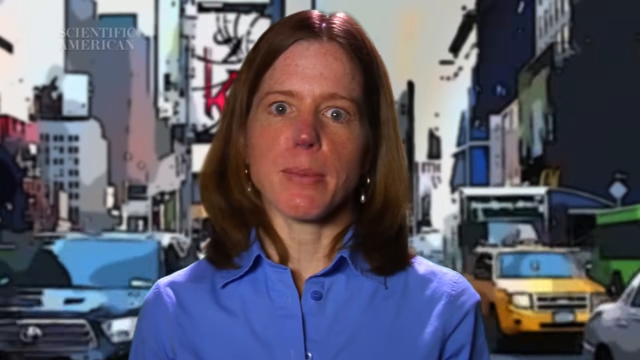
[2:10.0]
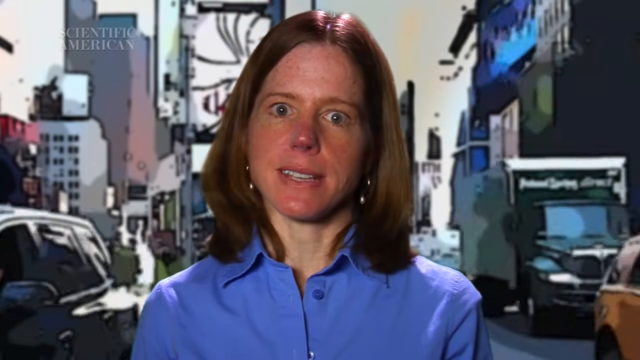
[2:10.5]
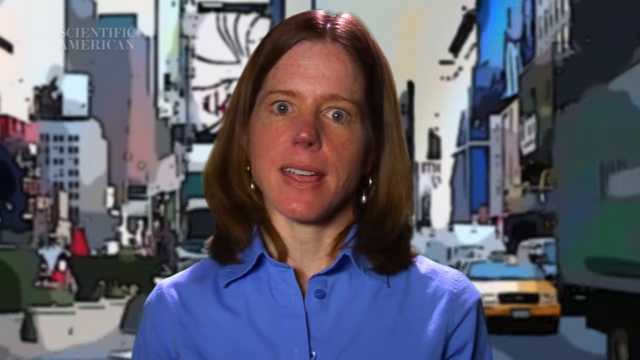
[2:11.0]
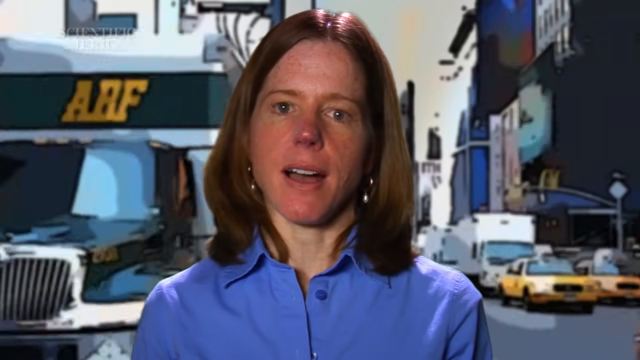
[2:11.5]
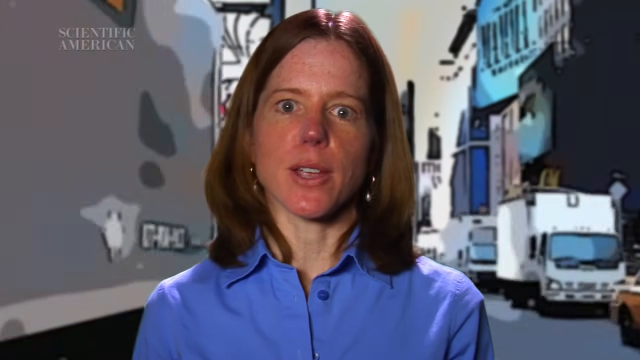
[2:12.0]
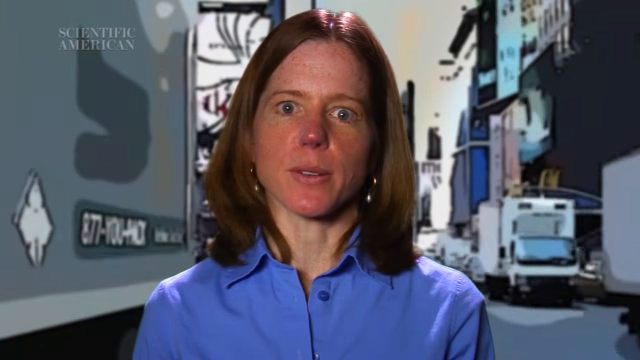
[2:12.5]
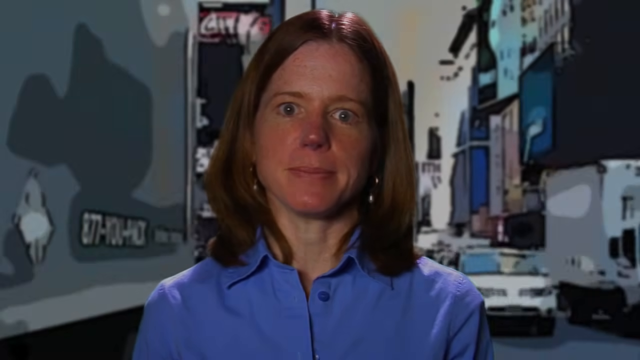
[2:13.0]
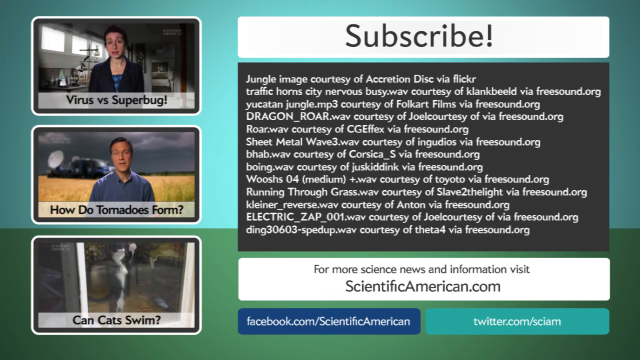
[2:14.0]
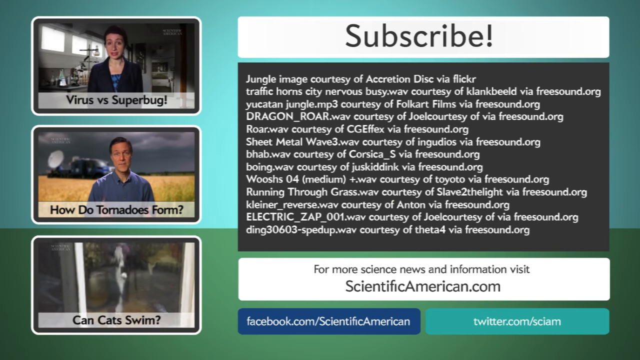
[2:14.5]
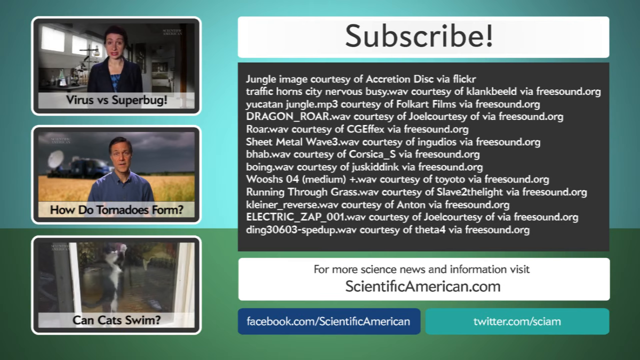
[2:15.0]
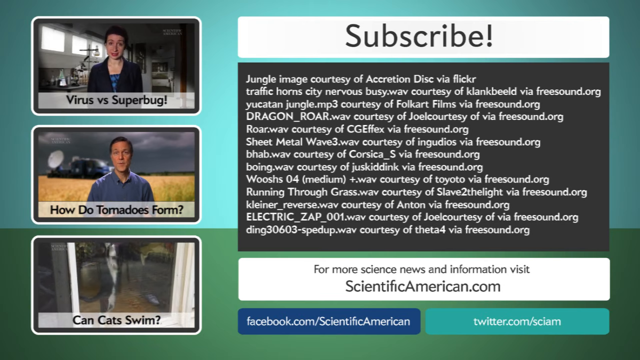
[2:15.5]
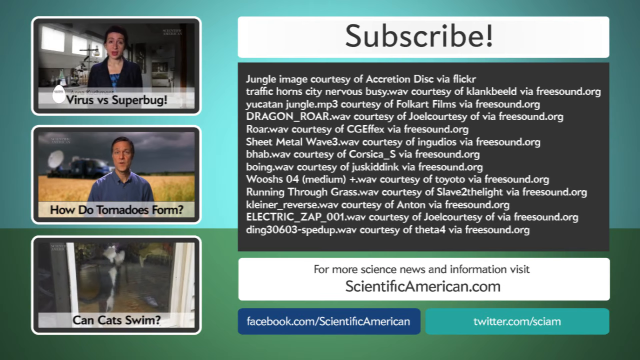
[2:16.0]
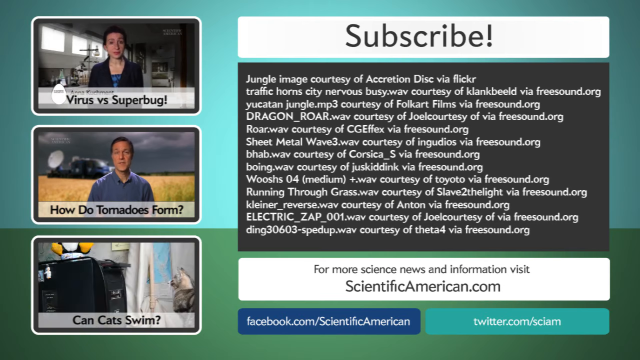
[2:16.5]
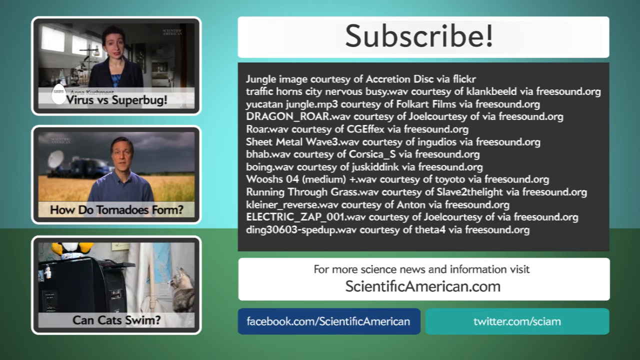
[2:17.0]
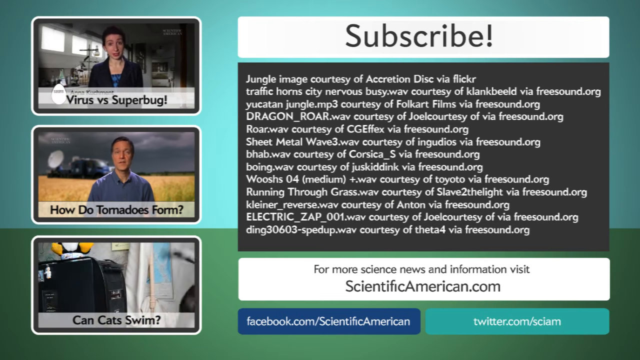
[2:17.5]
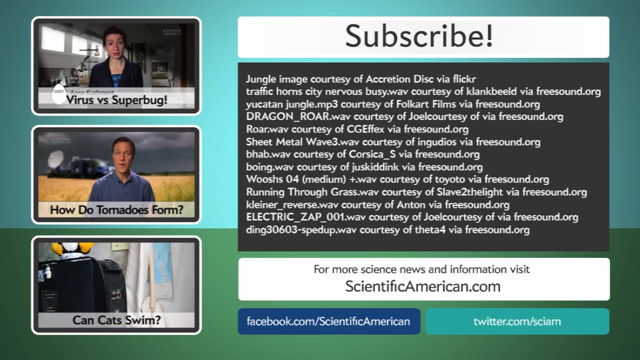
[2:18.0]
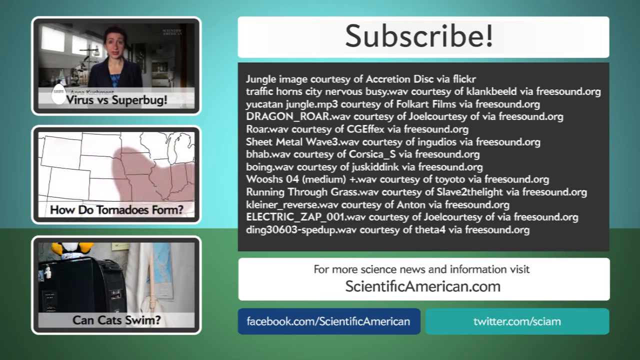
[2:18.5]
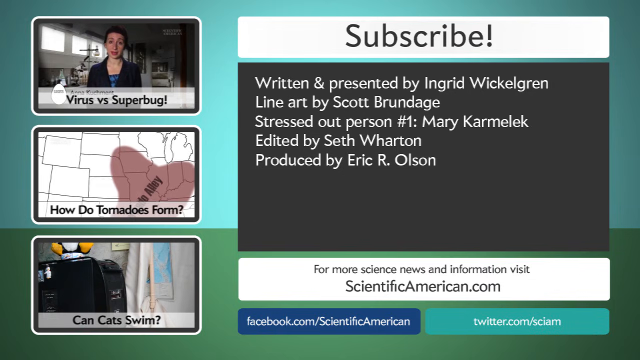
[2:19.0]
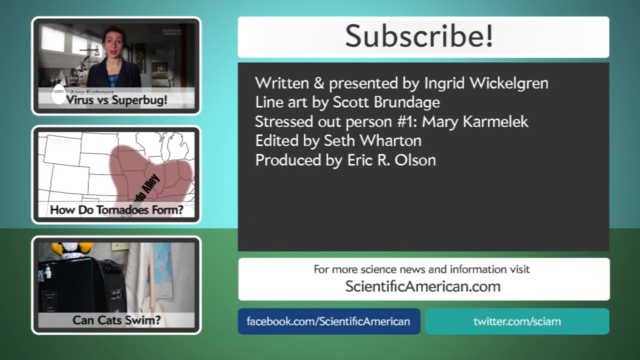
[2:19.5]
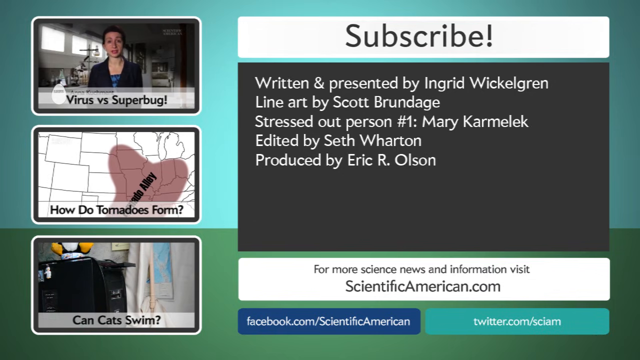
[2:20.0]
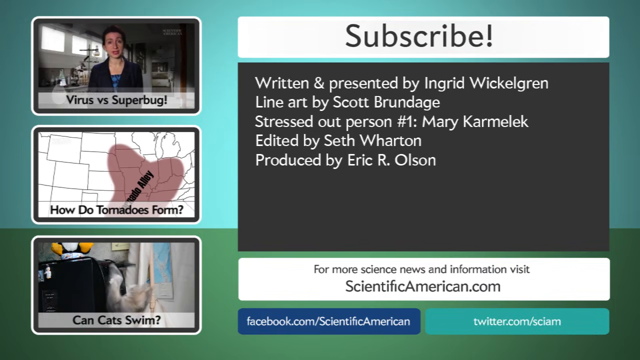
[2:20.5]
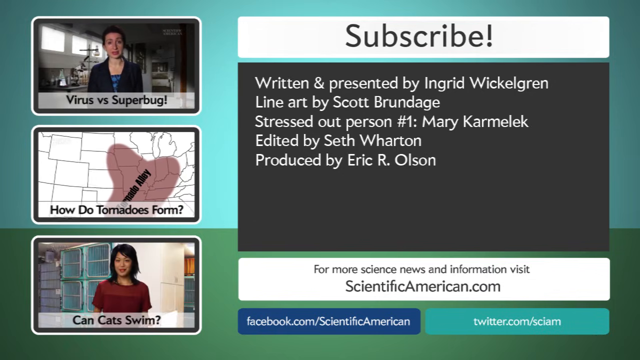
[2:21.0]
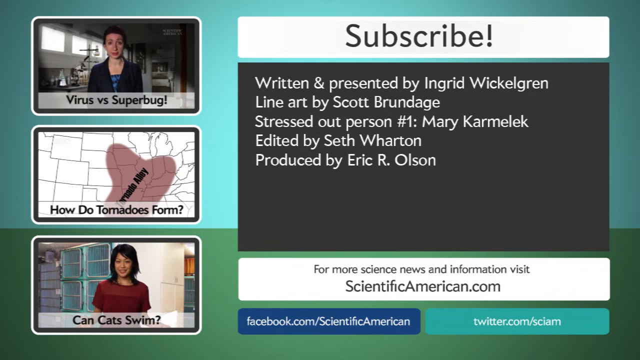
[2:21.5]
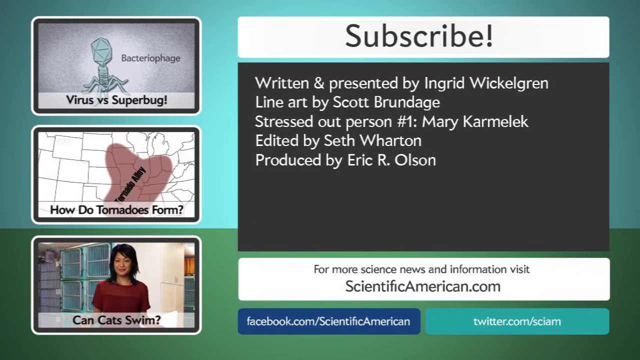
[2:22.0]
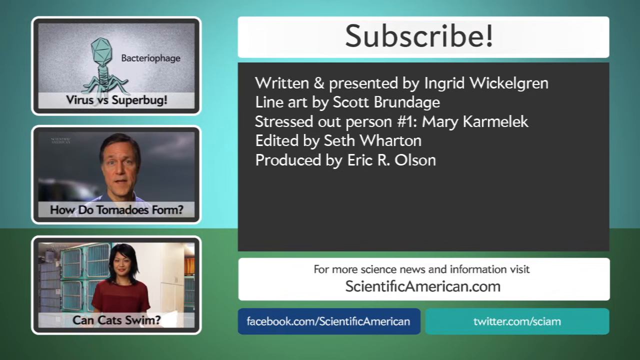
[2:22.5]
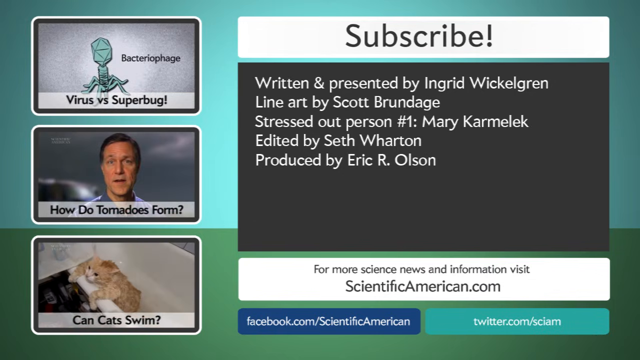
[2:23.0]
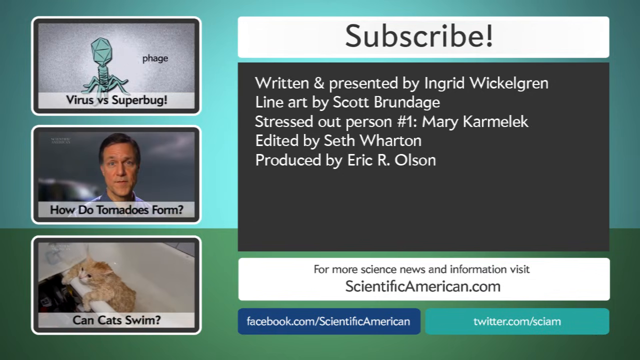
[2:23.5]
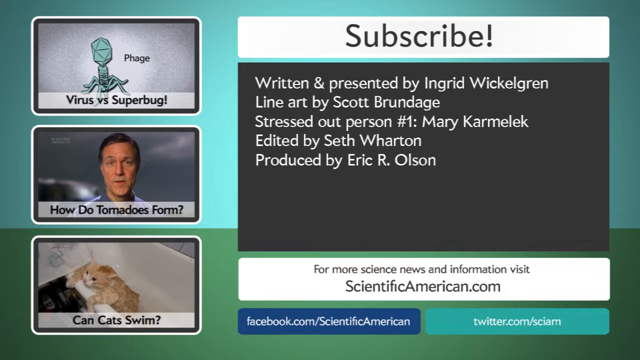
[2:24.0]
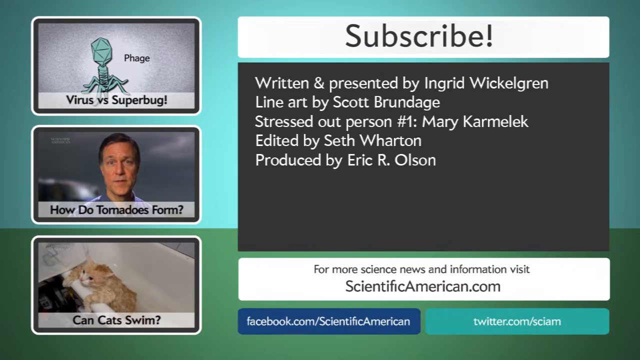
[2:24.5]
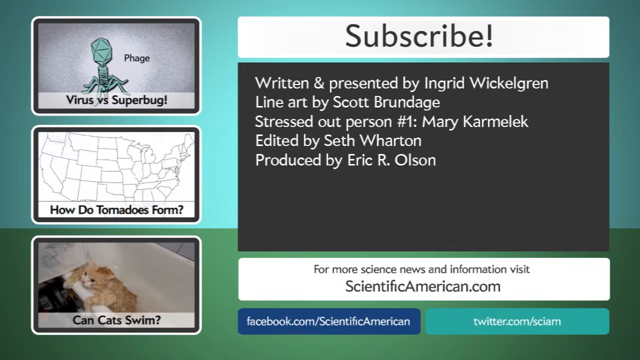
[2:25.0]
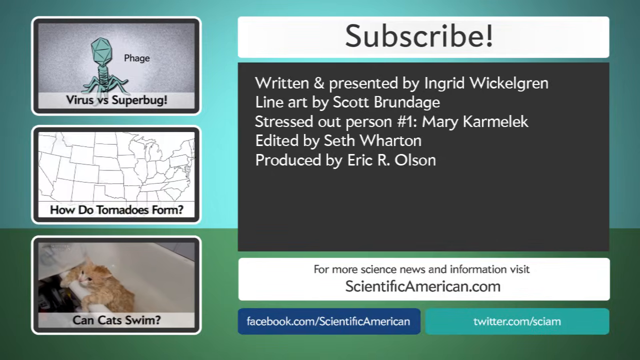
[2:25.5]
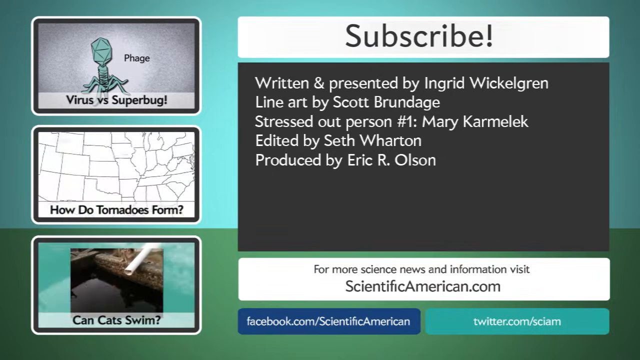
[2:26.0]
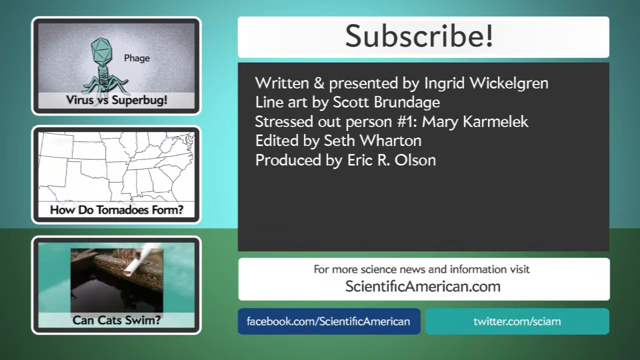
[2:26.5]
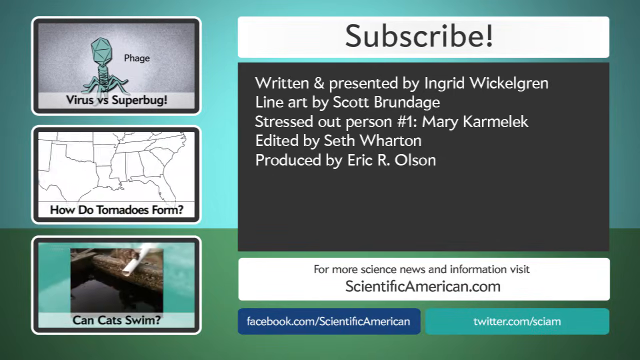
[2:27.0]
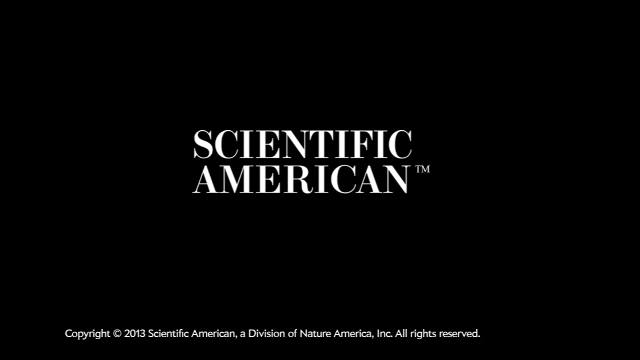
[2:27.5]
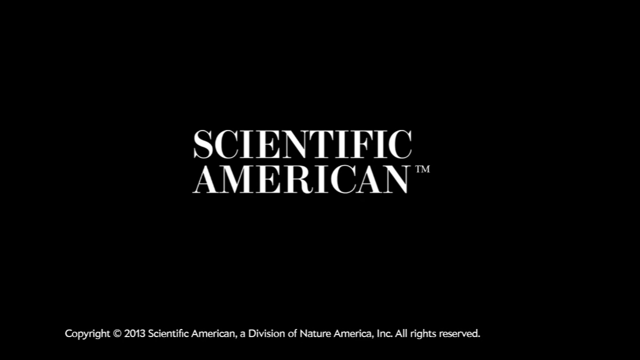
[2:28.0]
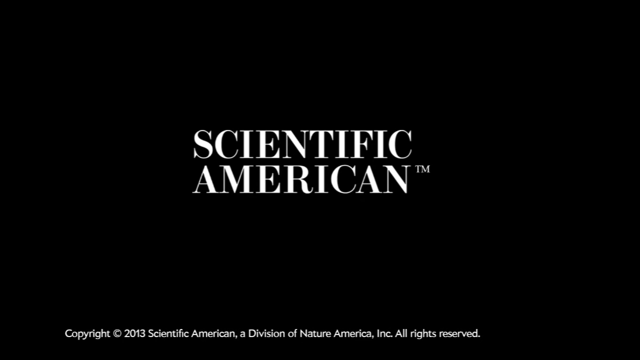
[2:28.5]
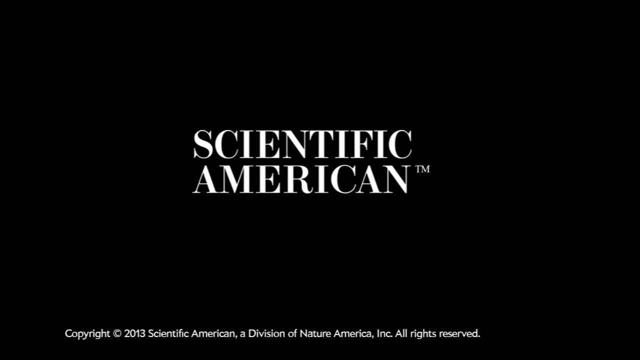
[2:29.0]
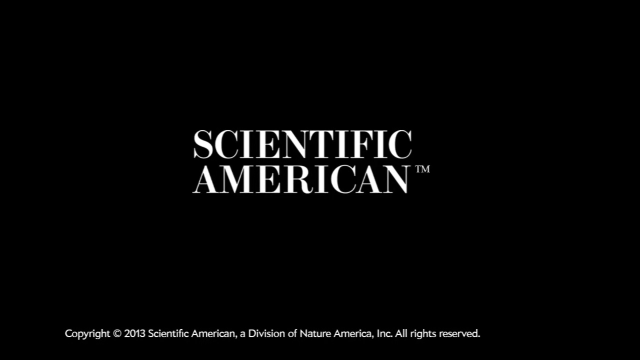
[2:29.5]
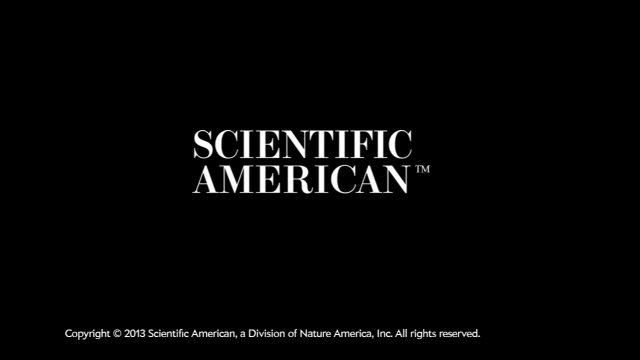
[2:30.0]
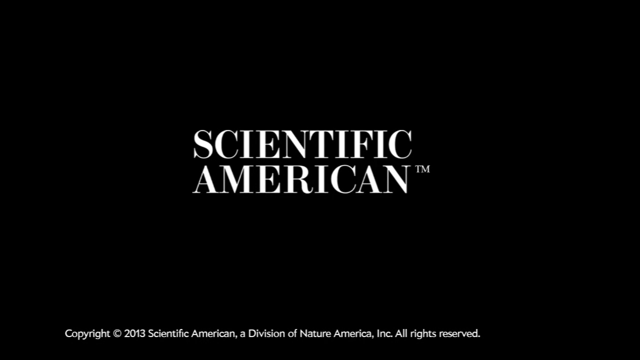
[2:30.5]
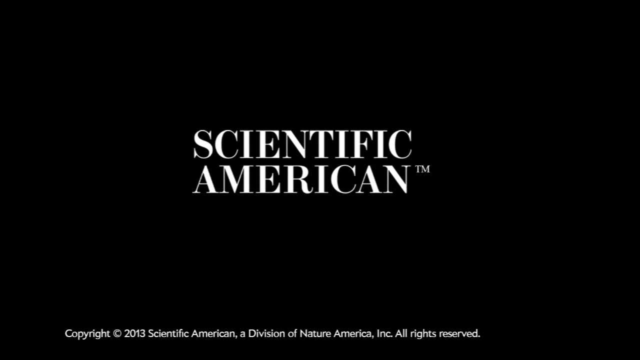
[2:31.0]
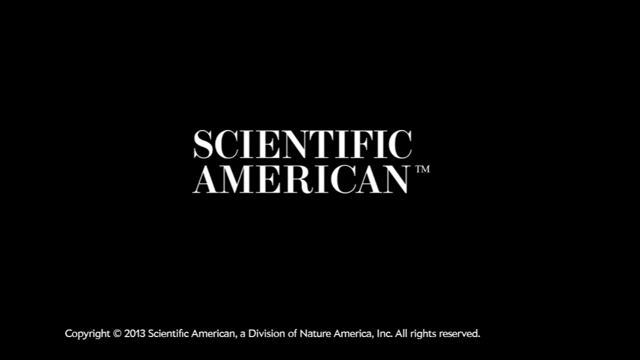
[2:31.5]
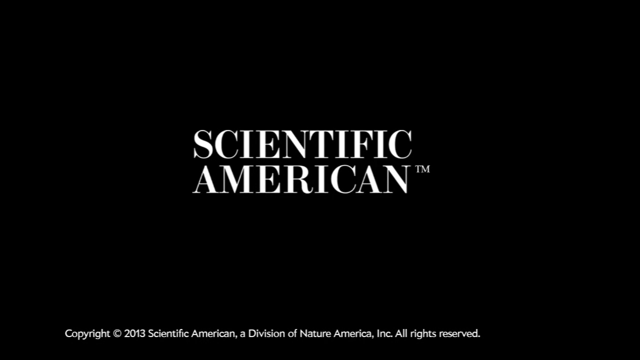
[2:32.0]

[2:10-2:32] Back in Times Square, a close-up shows the woman in the middle of the street with traffic approaching from behind her on both sides; her speech and eyes appear to suggest that she is done speaking. The video transitions to a subscribe page. The top banner is white with the black text "subscribe." A middle section is black with white text, and a bottom banner is white with black text that reads "for more science news and information, visit scientificamerican.com". To the left are images of people: at the top is a woman who appears to be in an office or a laboratory, with text at the bottom of the box reading "virus versus superbug". Below that is a man outside in what appears to be a field, with a banner beneath reading "how do tornadoes form?" in white text. Beneath that is a fuzzy image that appears to be a cat swiping at something. These images switch out as other images pop up in the boxes to the left. The video then transitions to a black screen with white text in the middle reading "Scientific American".